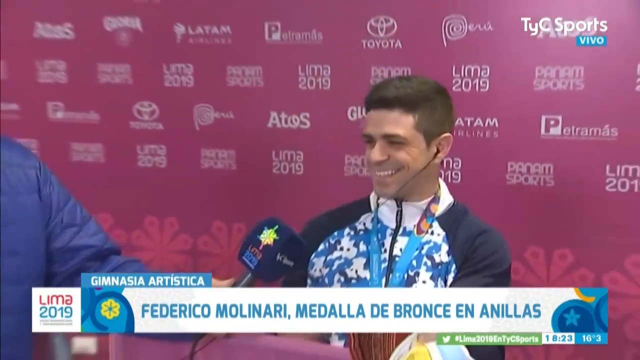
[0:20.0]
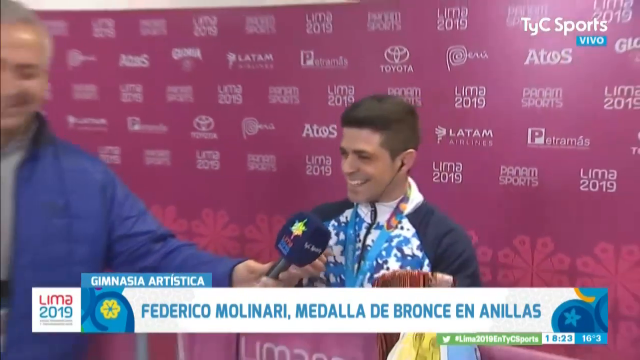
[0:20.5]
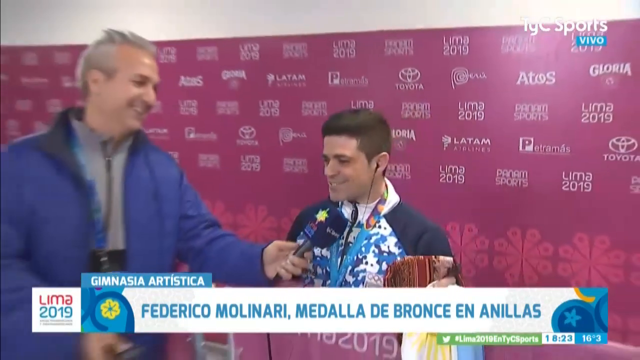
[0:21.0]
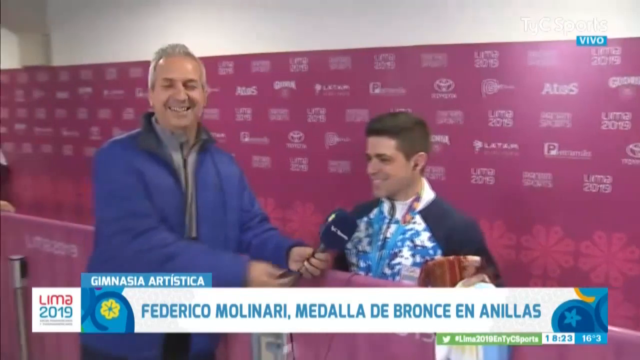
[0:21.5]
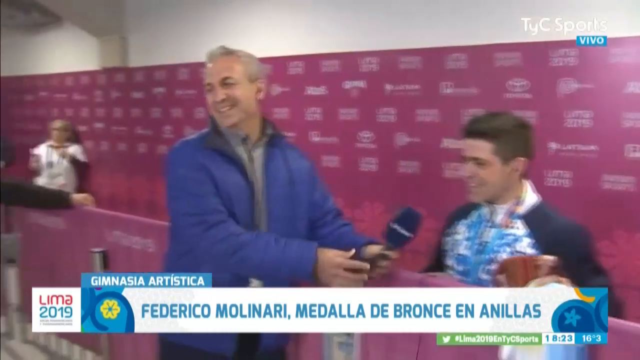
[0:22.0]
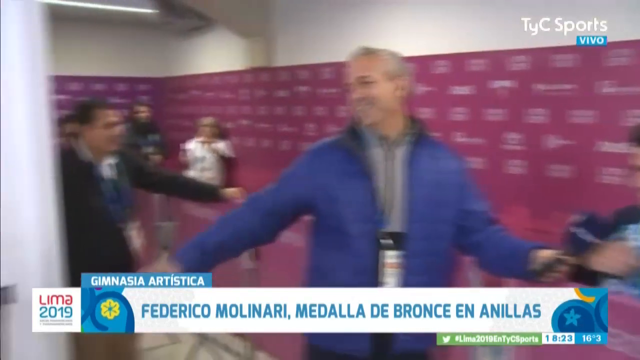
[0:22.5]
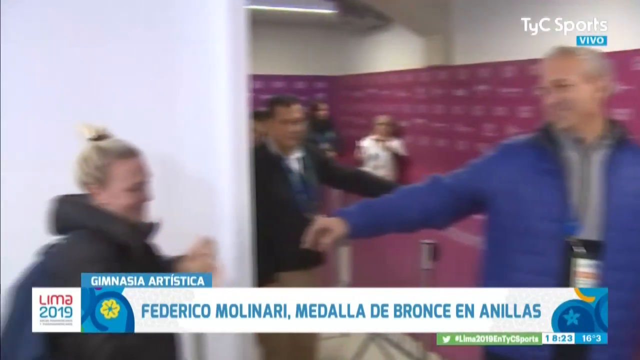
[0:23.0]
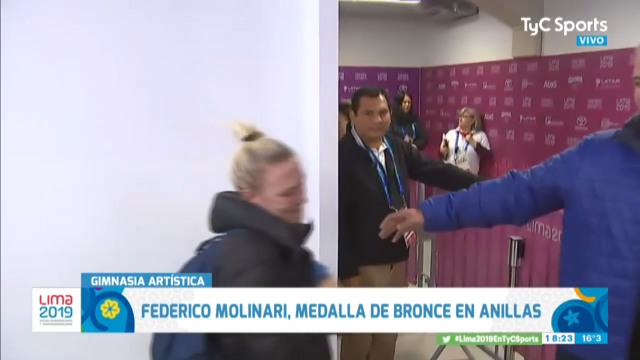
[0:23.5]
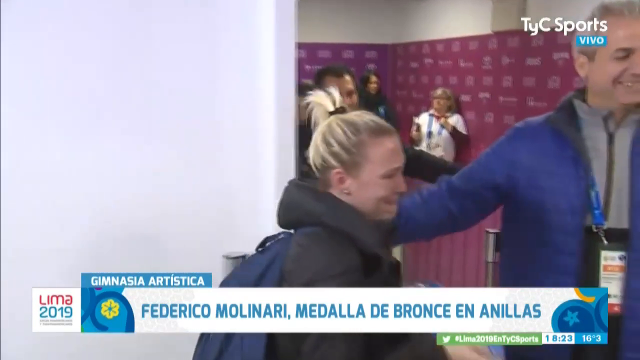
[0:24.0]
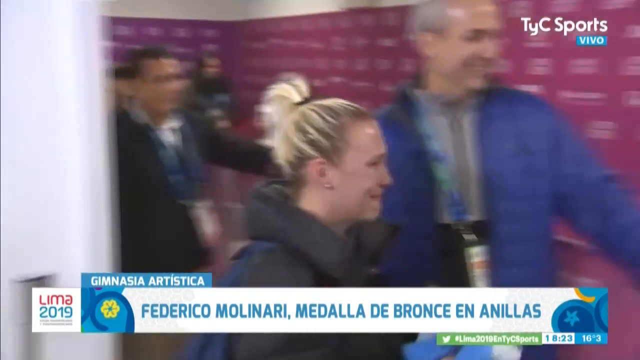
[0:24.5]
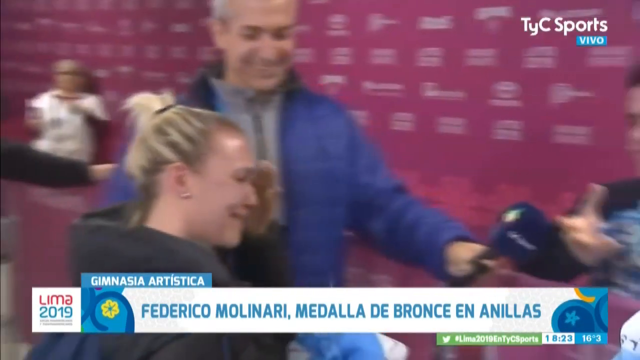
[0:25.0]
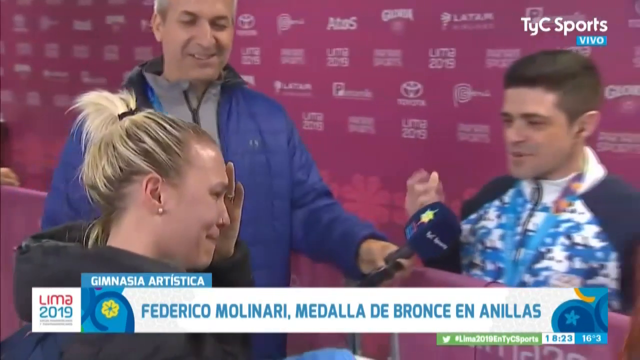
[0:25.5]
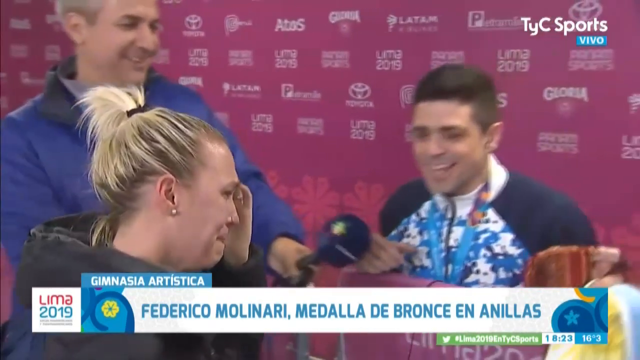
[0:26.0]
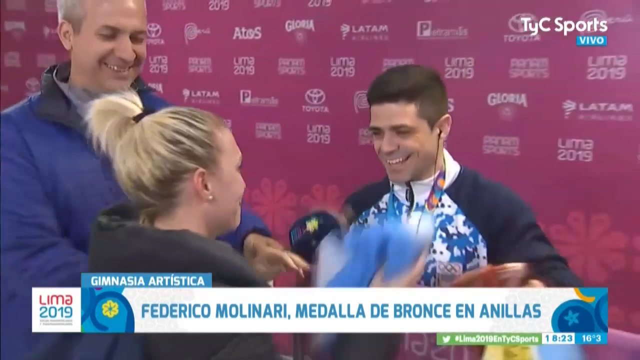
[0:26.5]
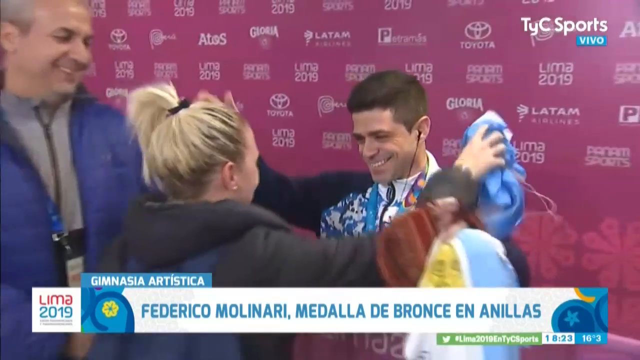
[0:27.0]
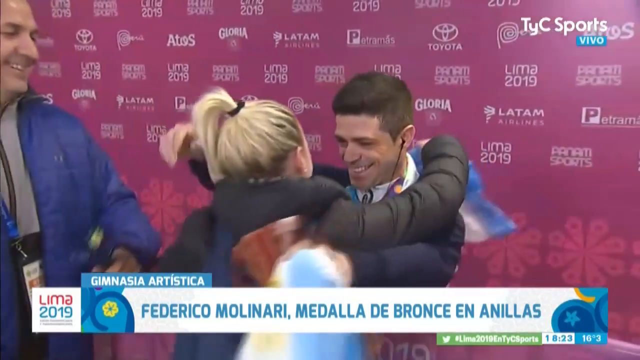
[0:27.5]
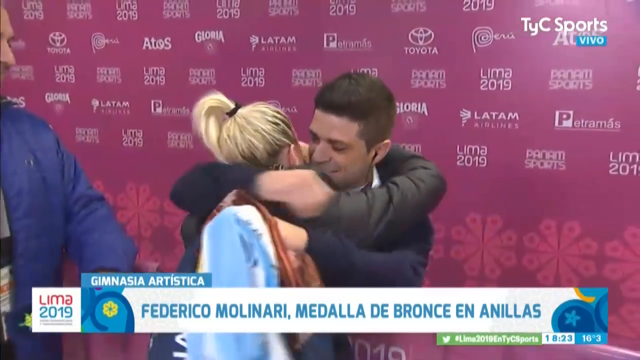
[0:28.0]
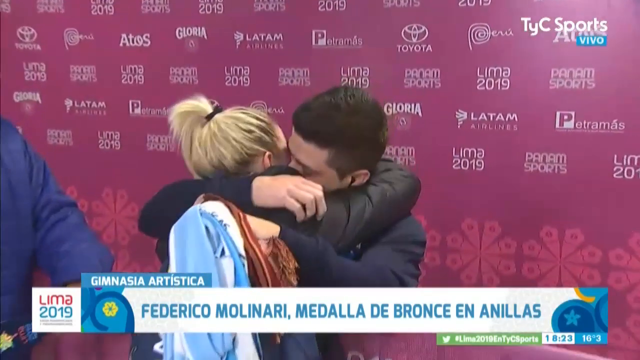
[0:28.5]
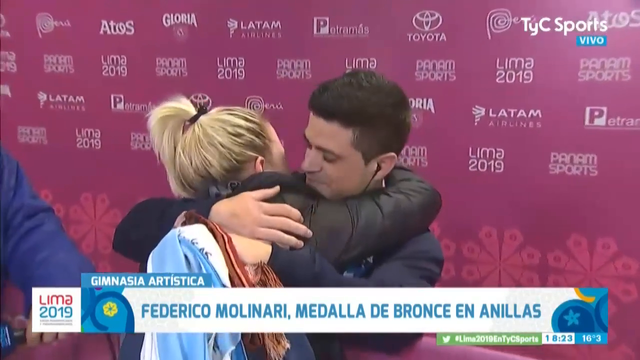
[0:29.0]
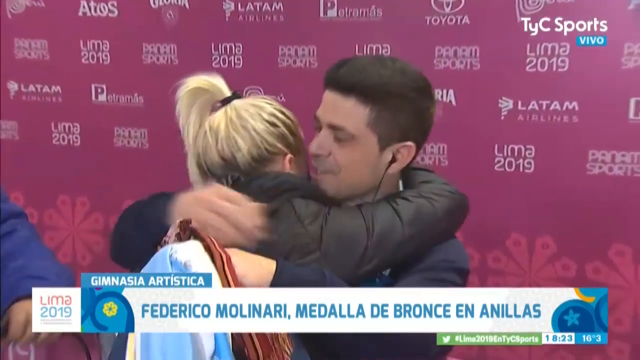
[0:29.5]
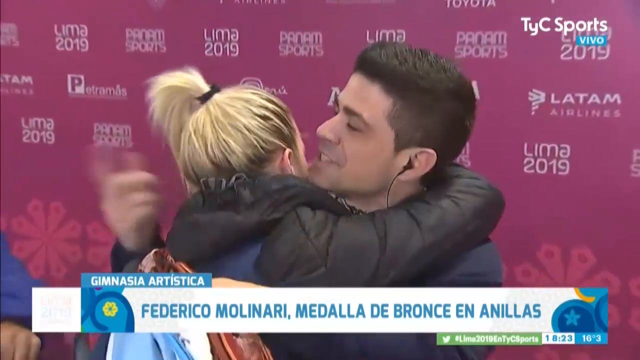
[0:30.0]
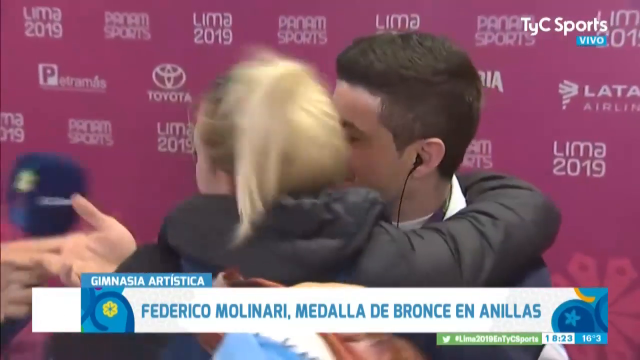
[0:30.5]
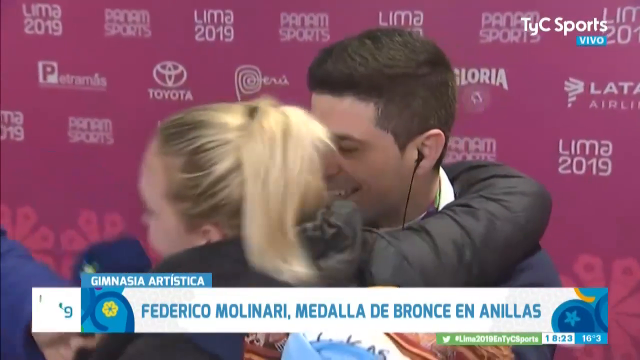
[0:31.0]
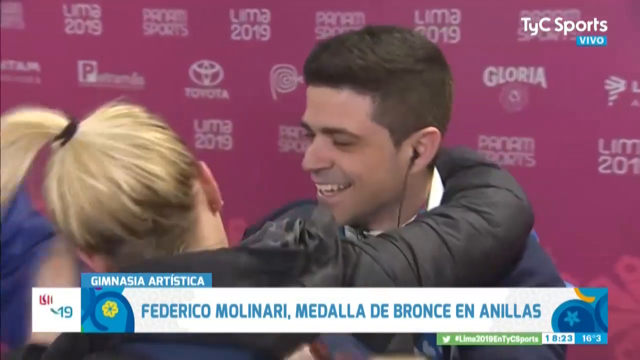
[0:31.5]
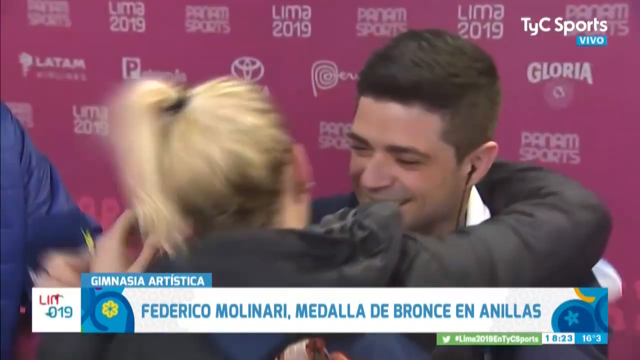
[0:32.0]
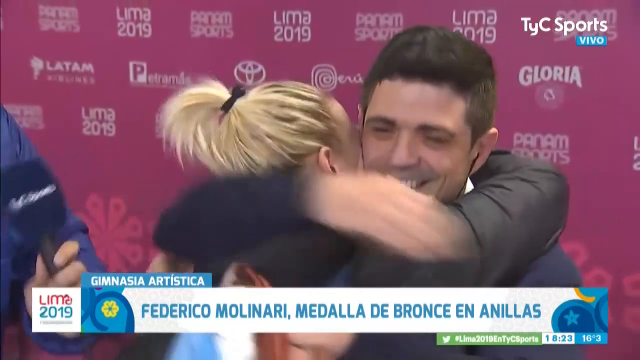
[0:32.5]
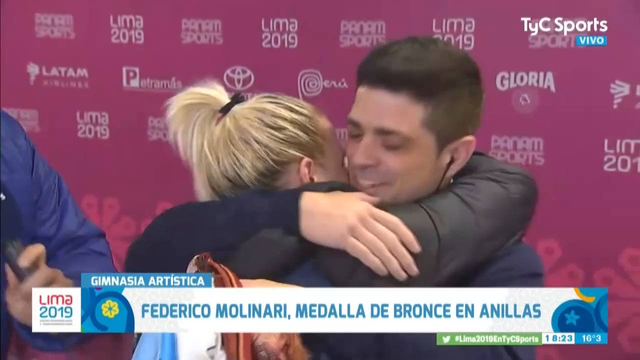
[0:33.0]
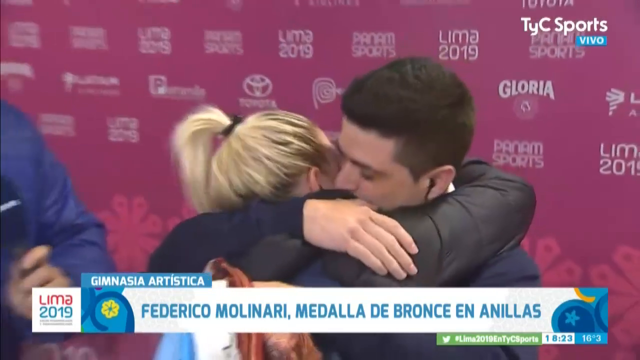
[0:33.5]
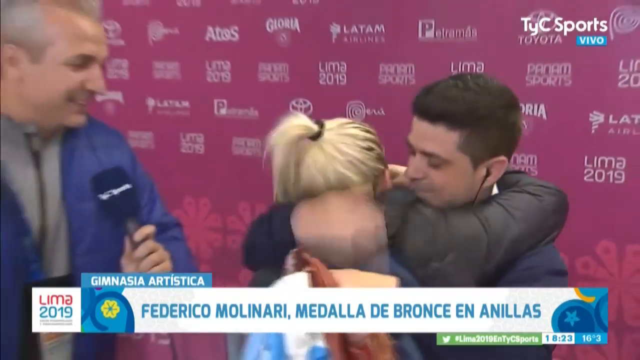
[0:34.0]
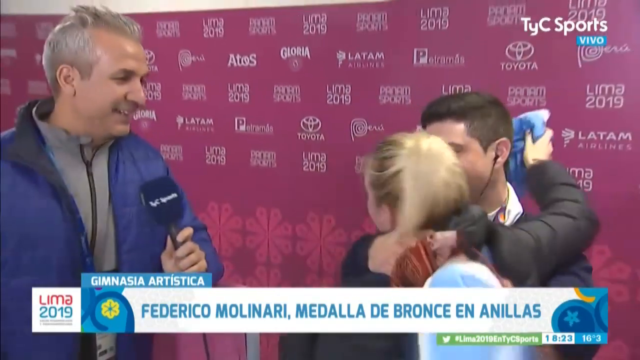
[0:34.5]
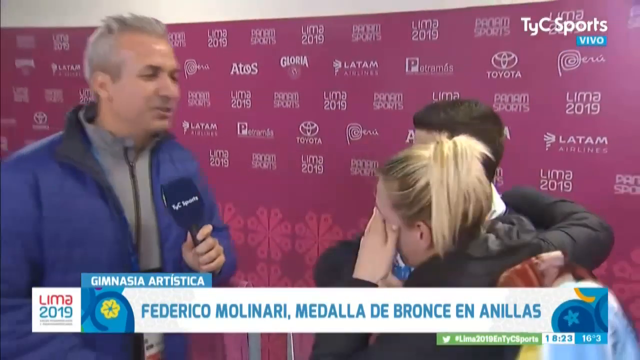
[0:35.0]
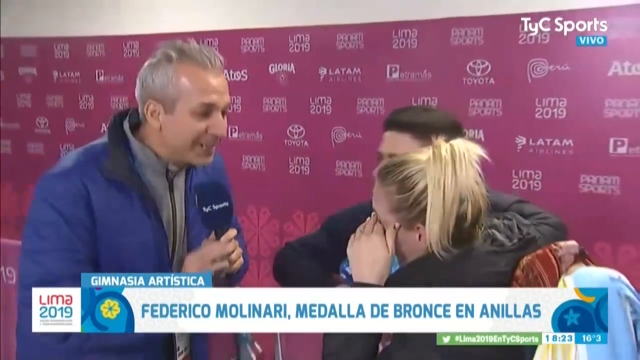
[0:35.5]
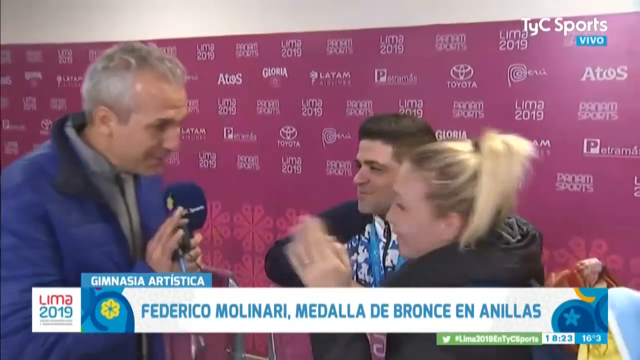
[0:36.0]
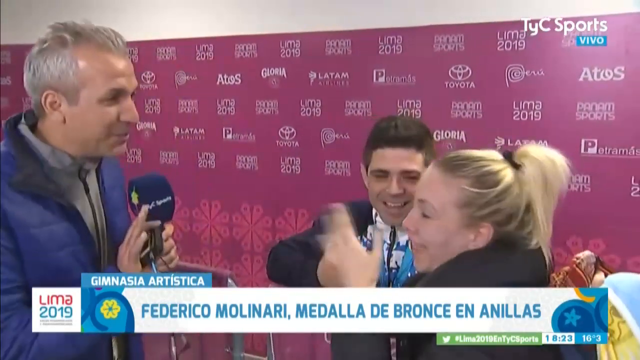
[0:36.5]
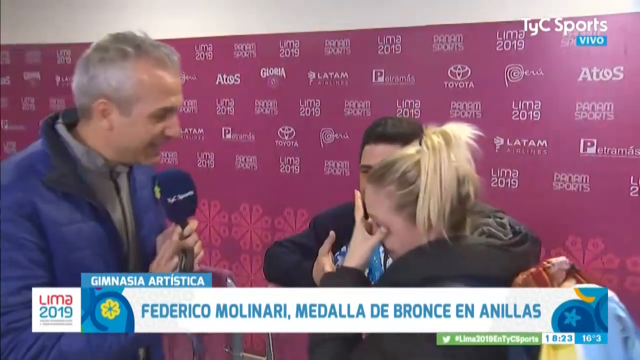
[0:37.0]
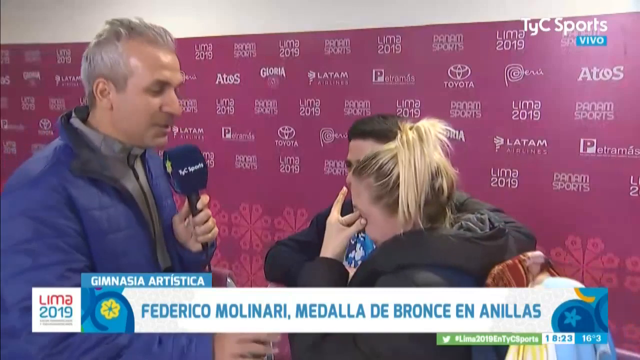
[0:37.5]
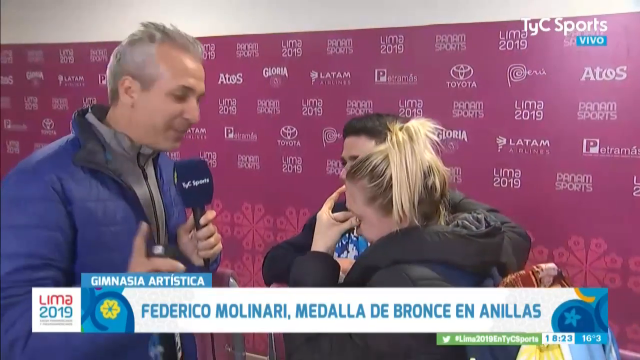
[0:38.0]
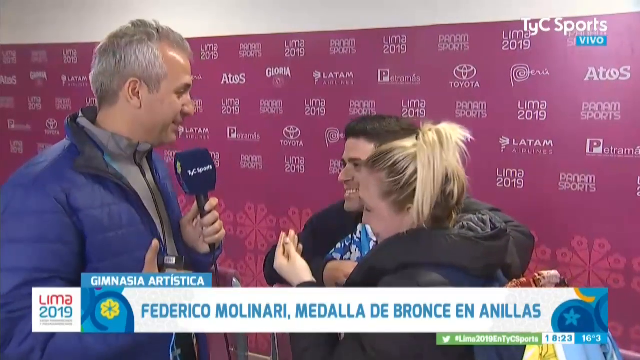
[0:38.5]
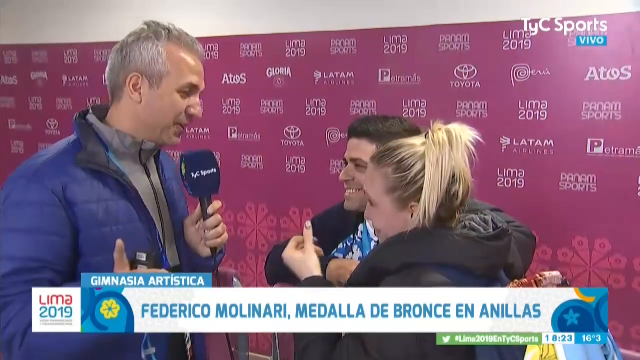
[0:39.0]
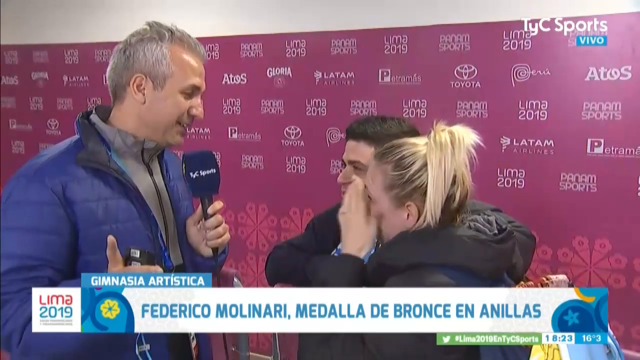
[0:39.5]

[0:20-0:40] A man is being interviewed. A person standing up to the left holds a microphone in front of him as he talks into it. The camera pans to the left, showing the person holding the microphone, and then someone is pulled over to the man; she looks like his girlfriend or wife. They embrace and kiss each other on the cheek, and she is crying, seemingly happy tears. The man being interviewed smiles widely and laughs toward the end of the interview. He appears to be holding maybe some type of trophy in his hand, and he has a strap around his neck that is probably holding a gold medal at its end, so he appears to have won a sporting event. The poster board behind him has a "Lima 2019" logo, possibly indicating the 2019 Lima games.